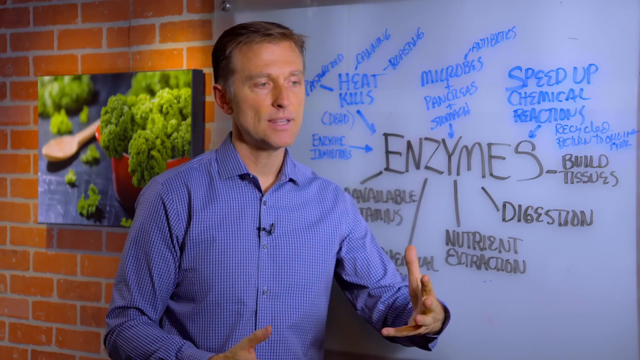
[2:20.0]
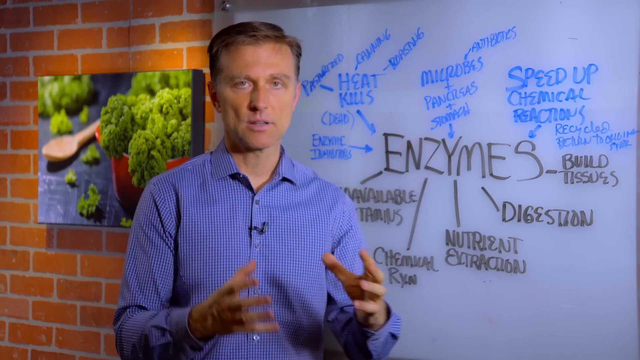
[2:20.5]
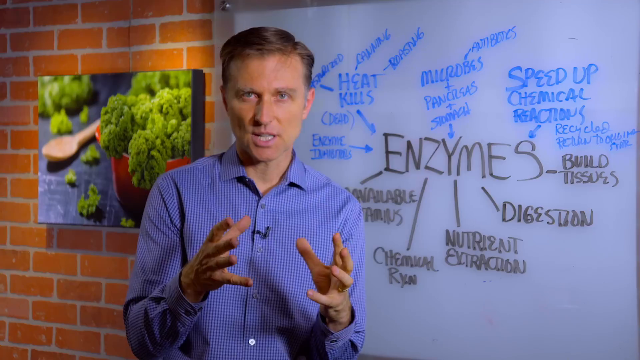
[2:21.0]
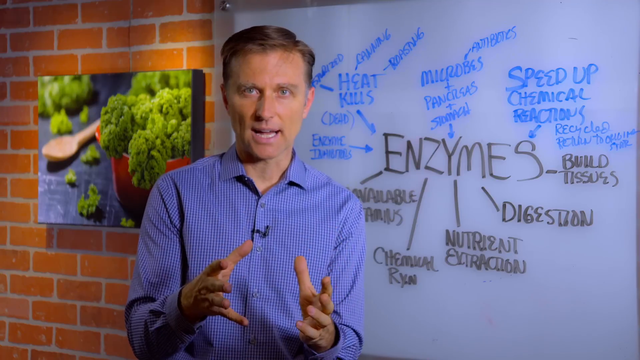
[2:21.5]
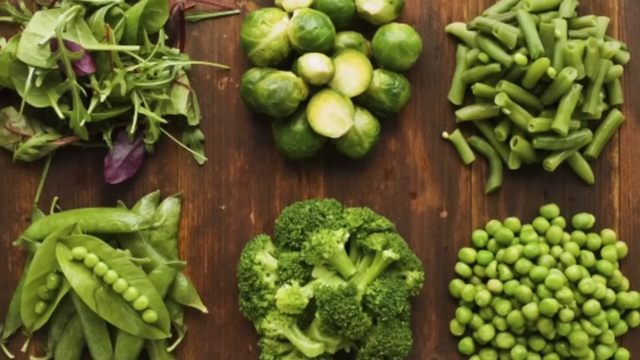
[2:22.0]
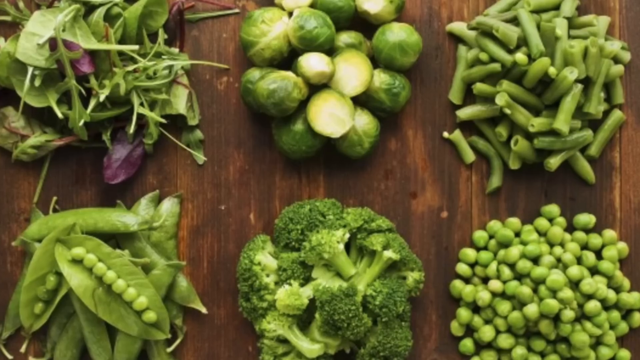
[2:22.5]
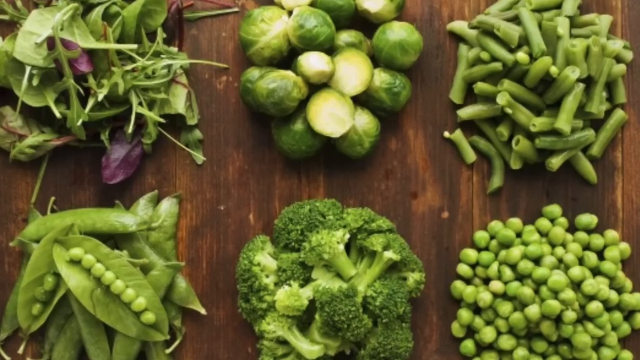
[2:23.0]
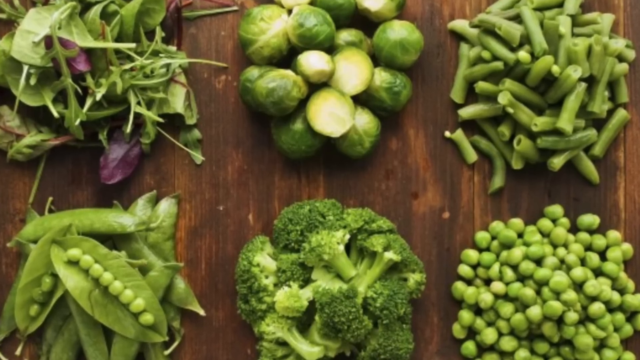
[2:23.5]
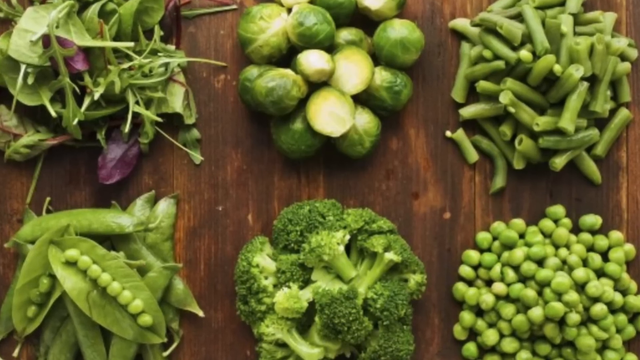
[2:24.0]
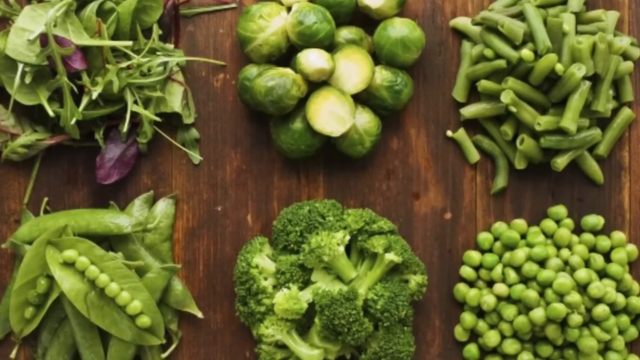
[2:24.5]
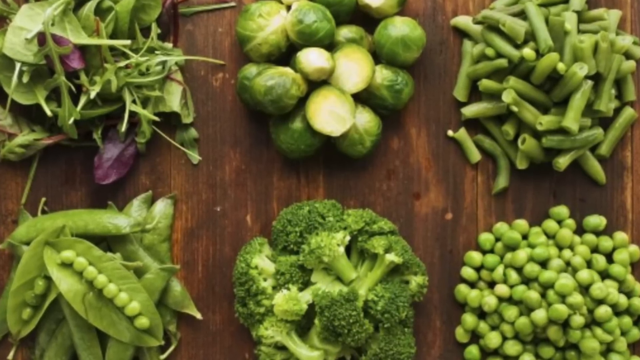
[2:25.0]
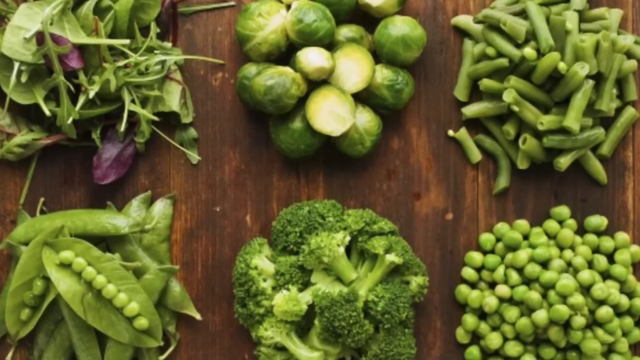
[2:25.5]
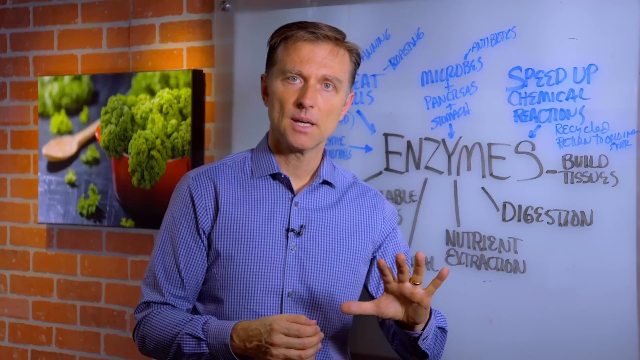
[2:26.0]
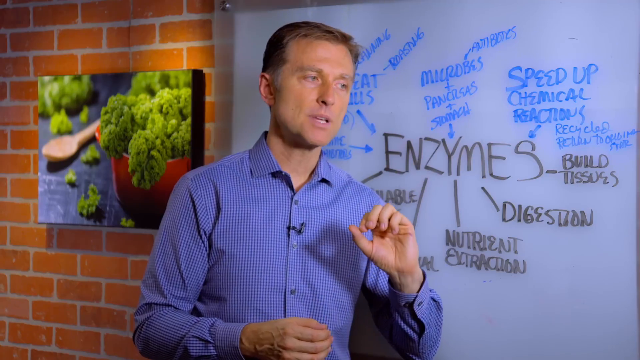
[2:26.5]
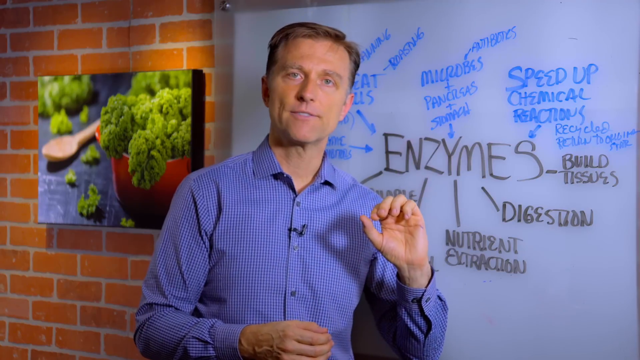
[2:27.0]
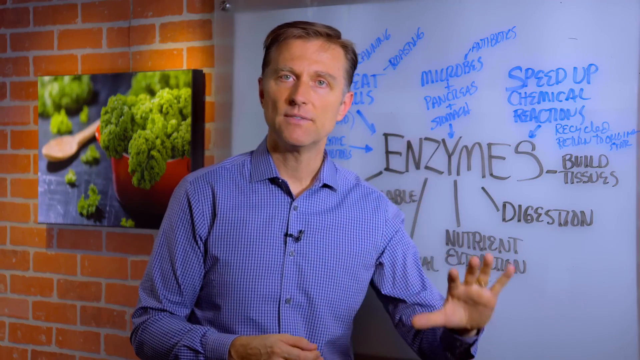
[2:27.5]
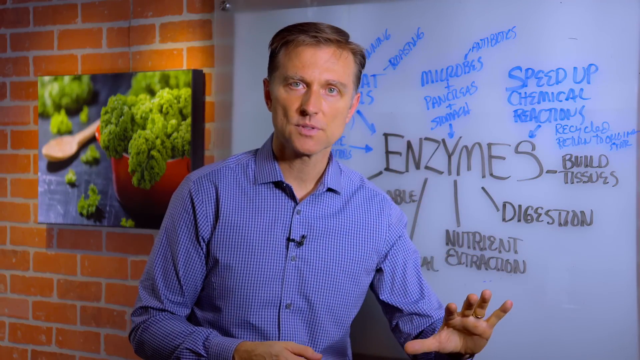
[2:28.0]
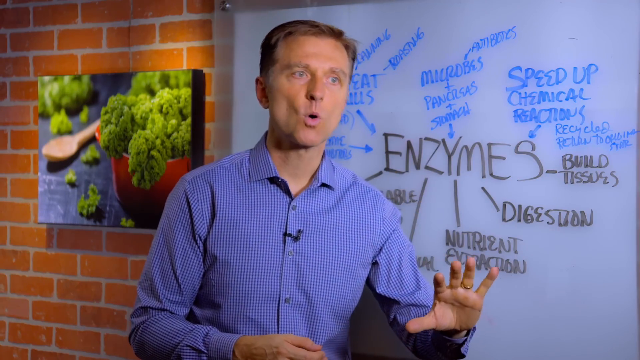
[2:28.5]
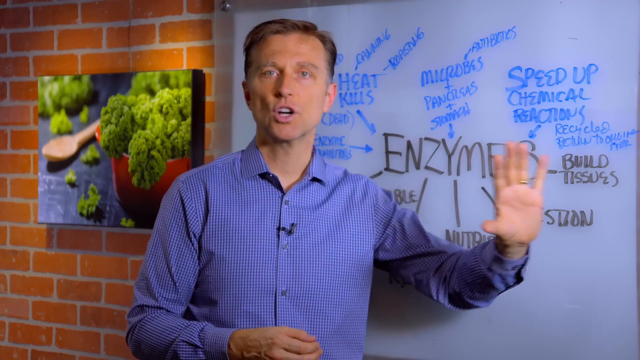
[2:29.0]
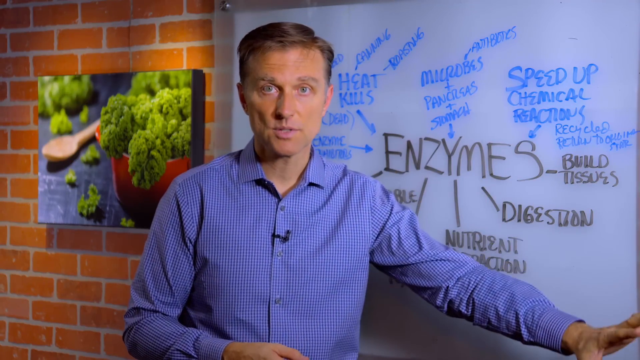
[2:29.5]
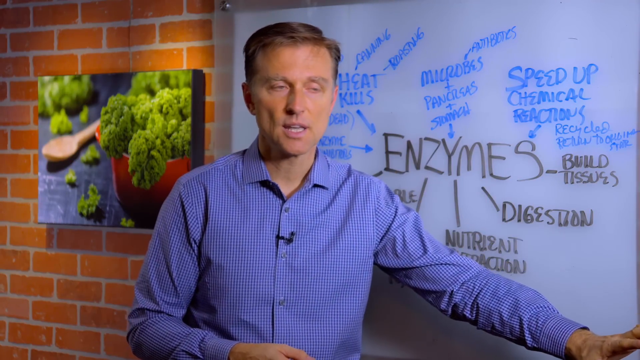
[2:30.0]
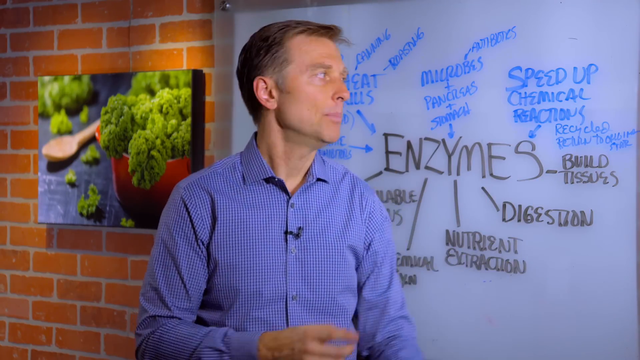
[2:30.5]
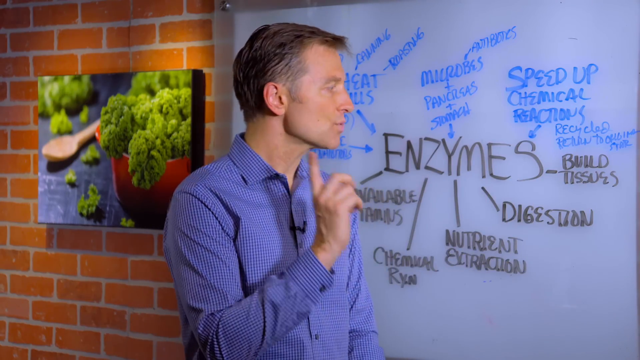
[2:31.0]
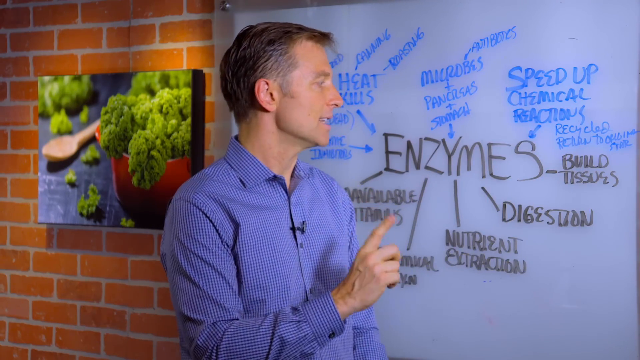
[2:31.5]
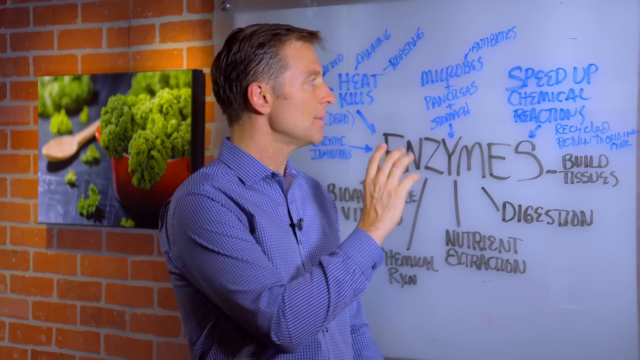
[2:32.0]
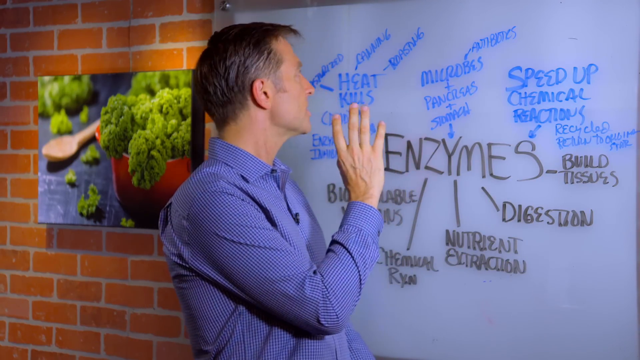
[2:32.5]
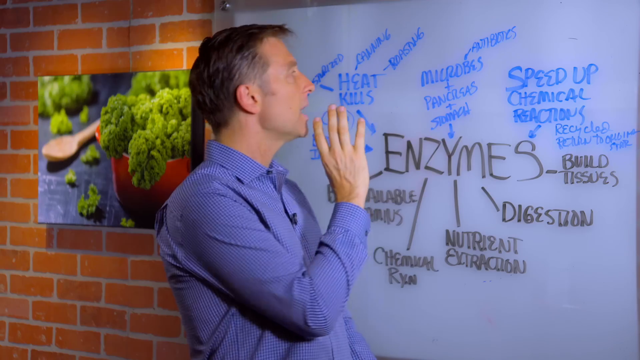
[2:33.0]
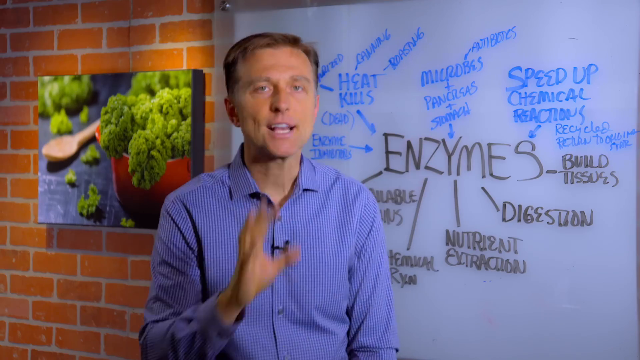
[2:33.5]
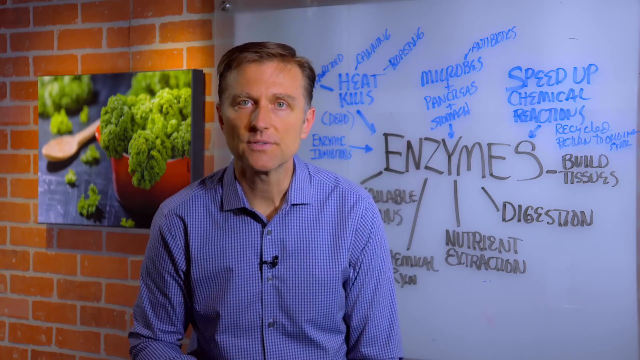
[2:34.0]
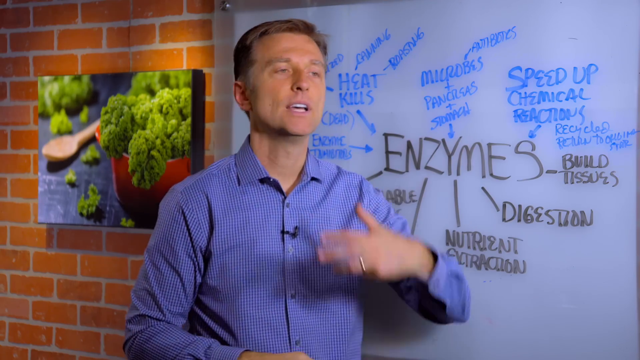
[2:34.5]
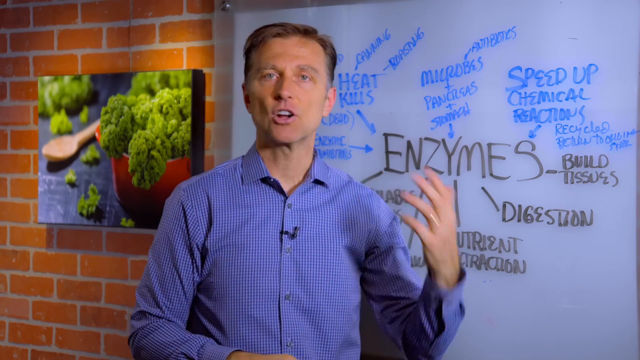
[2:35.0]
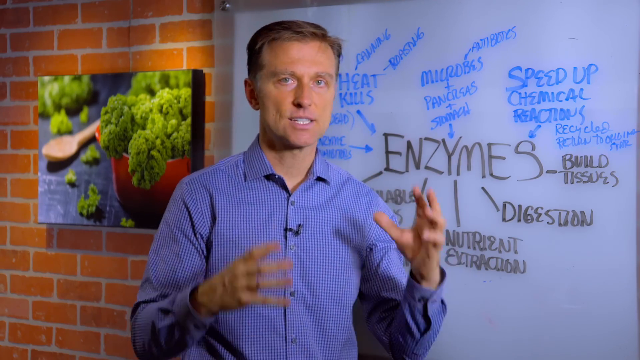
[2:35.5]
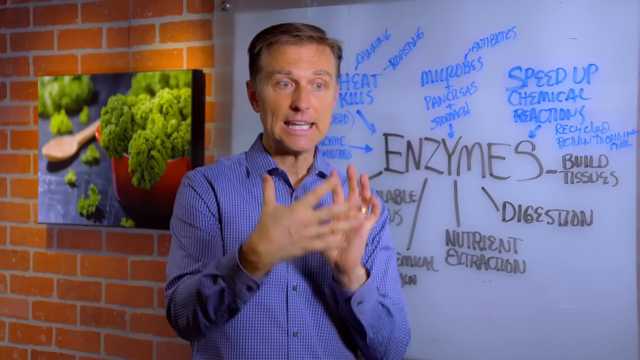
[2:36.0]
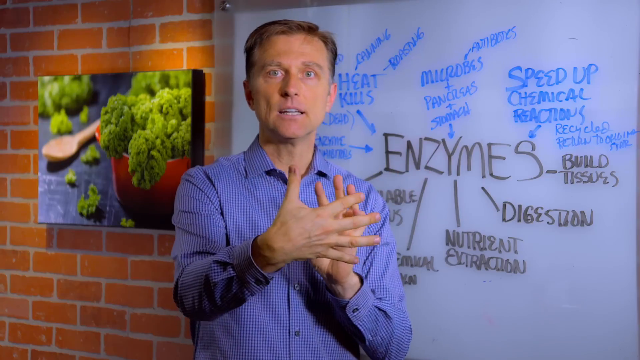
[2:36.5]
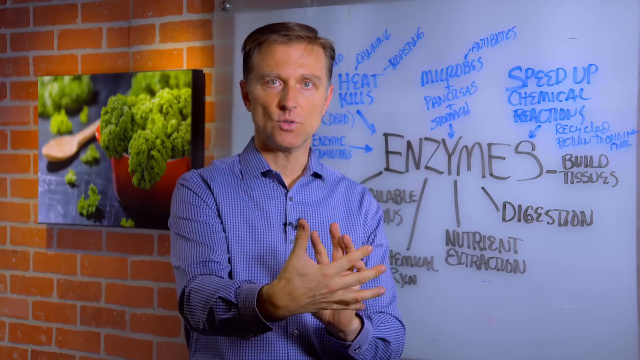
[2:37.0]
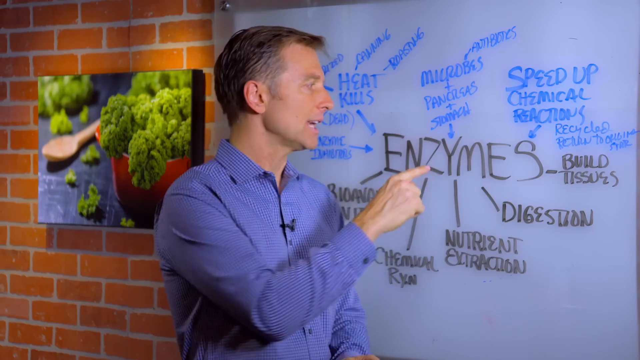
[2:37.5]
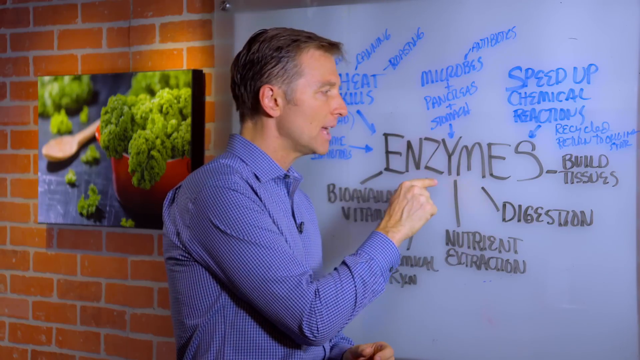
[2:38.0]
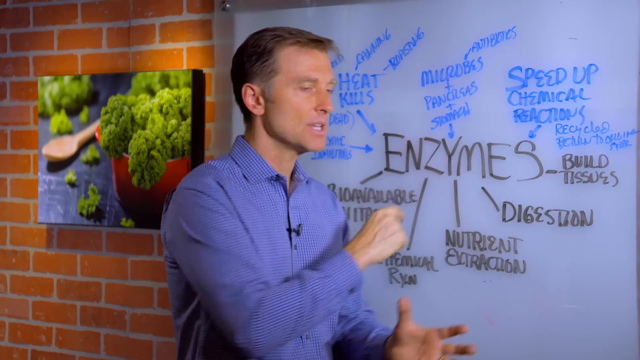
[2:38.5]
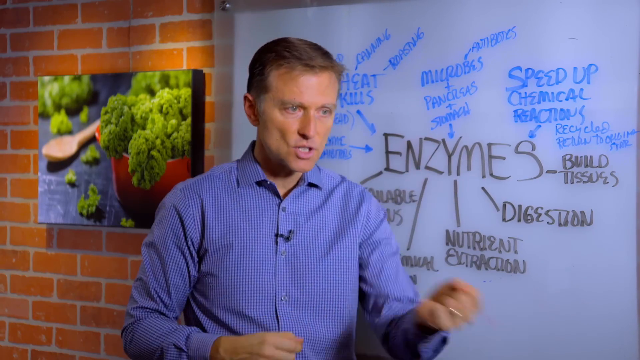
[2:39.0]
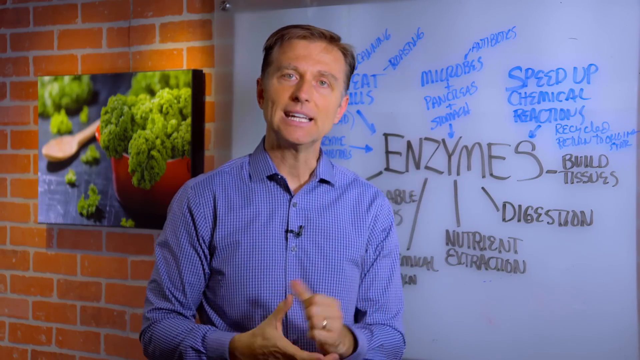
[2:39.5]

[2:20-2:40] The man moves his left arm near his right one, as if making the motion of some kind of object. An image of green vegetables then appears: broccoli that seems to be lying on a wooden table, peas, small cabbages, and lettuce or what seems to be arugula. The camera points forward toward the tables with the vegetables. The video returns to the man, who moves his left hand, points at the board again and moves his hand as if maybe trying to remember something. He again makes a pulling motion.